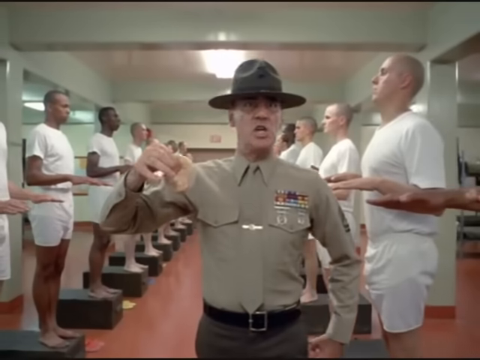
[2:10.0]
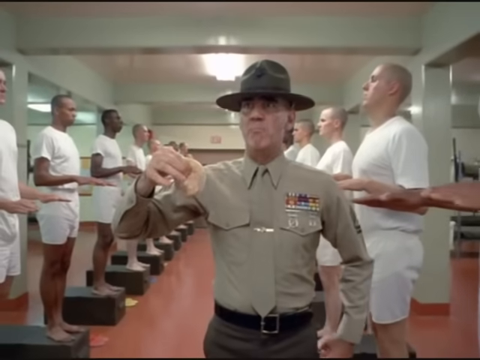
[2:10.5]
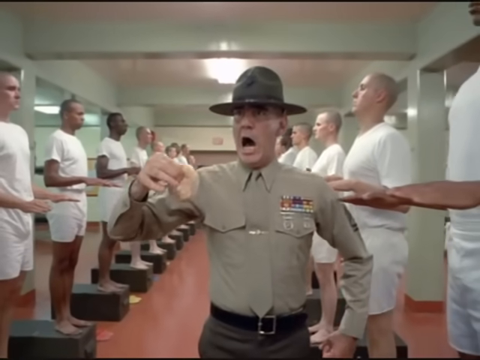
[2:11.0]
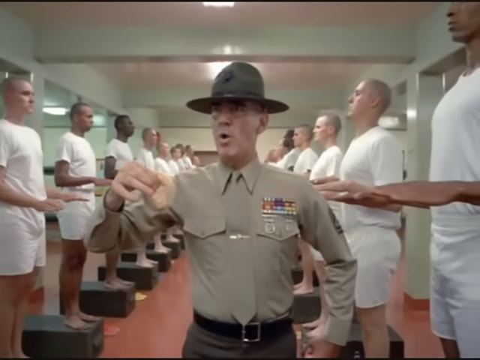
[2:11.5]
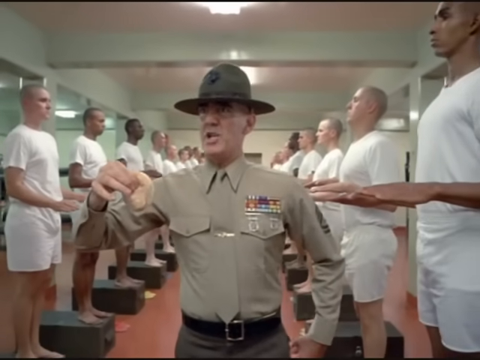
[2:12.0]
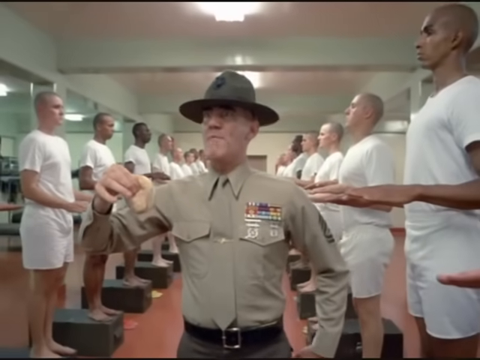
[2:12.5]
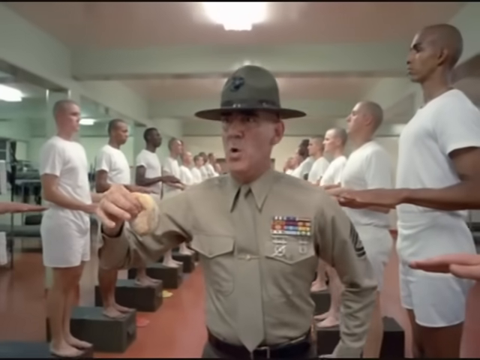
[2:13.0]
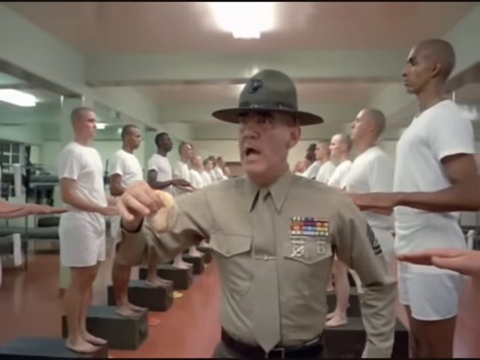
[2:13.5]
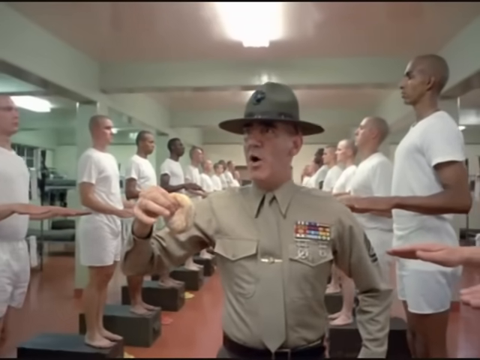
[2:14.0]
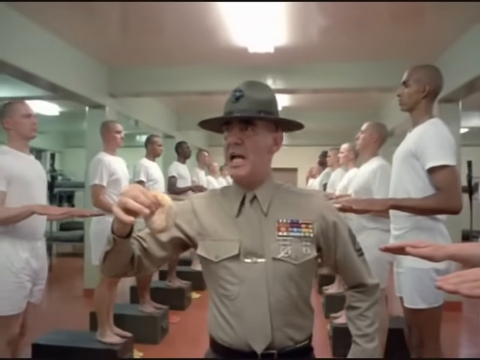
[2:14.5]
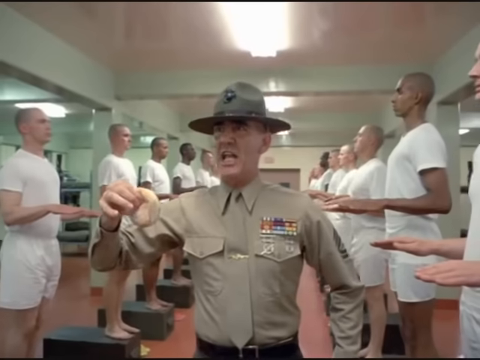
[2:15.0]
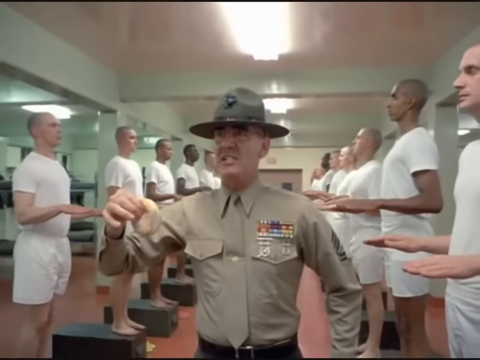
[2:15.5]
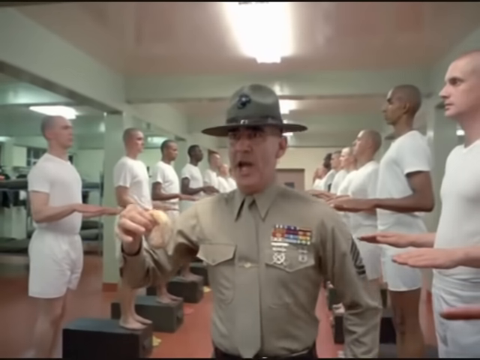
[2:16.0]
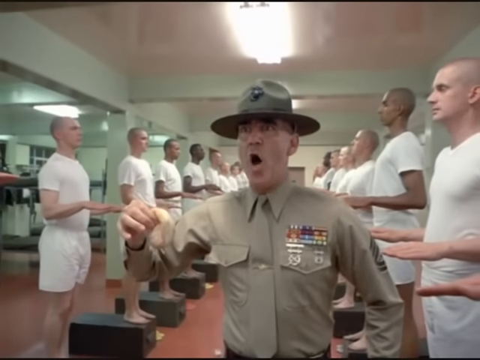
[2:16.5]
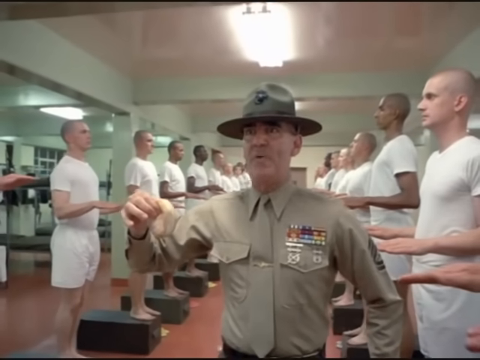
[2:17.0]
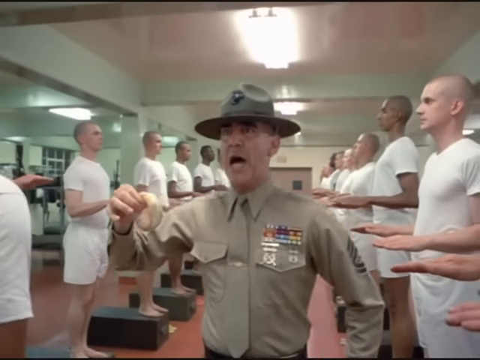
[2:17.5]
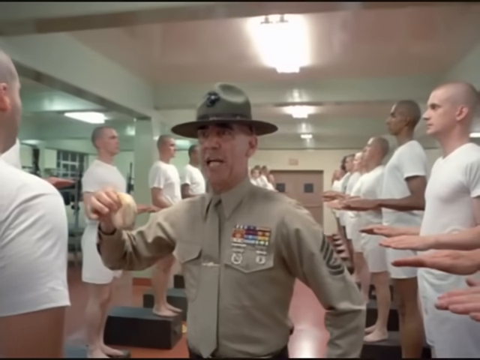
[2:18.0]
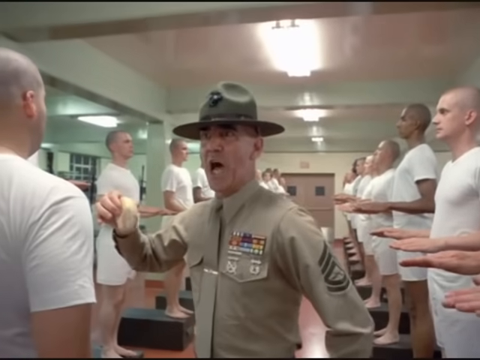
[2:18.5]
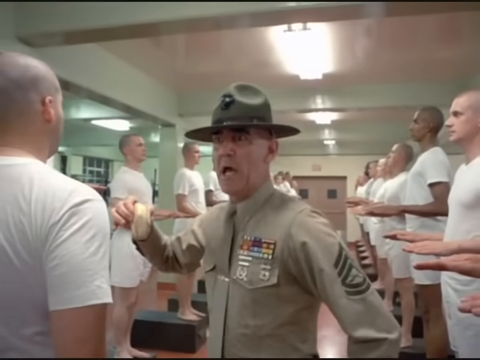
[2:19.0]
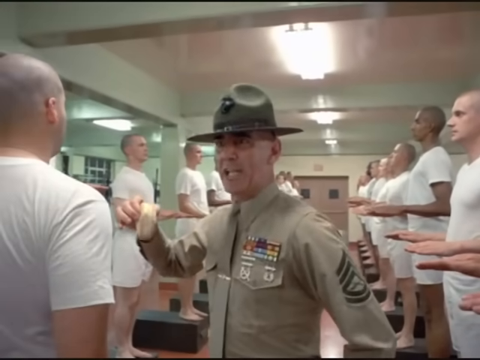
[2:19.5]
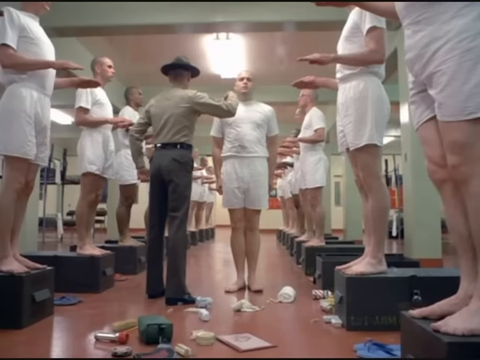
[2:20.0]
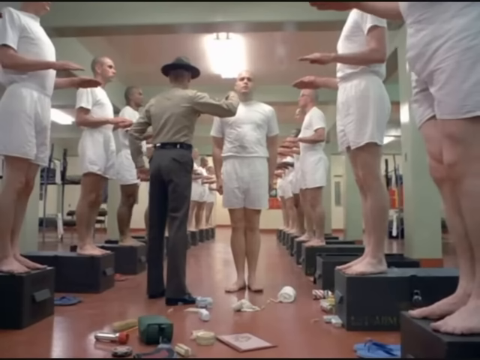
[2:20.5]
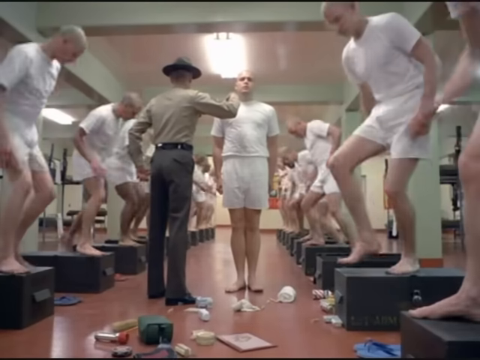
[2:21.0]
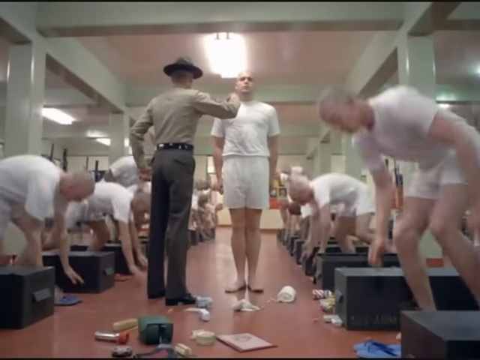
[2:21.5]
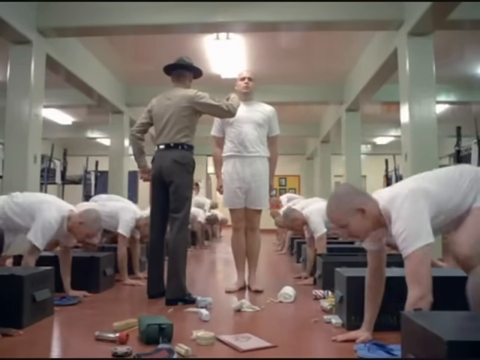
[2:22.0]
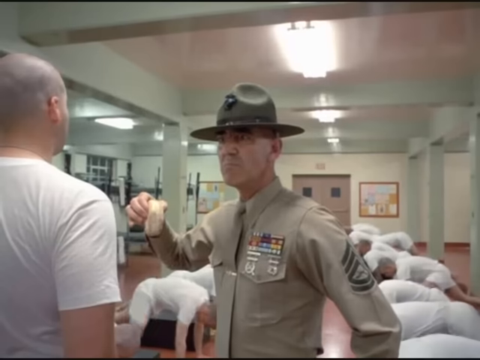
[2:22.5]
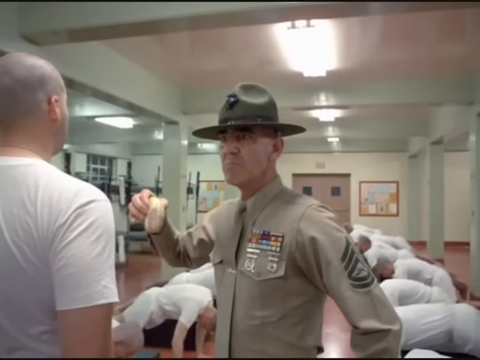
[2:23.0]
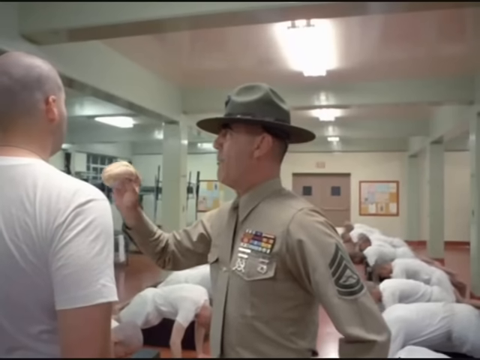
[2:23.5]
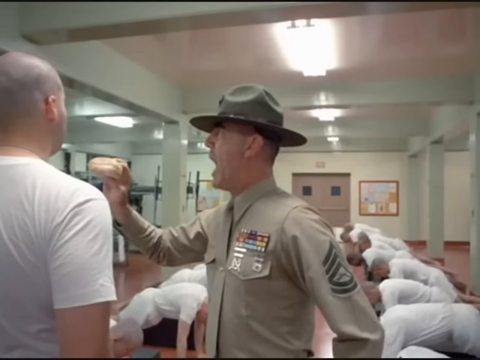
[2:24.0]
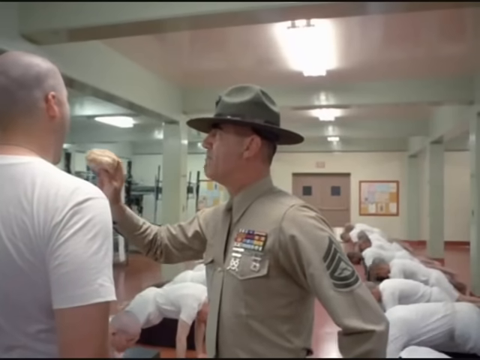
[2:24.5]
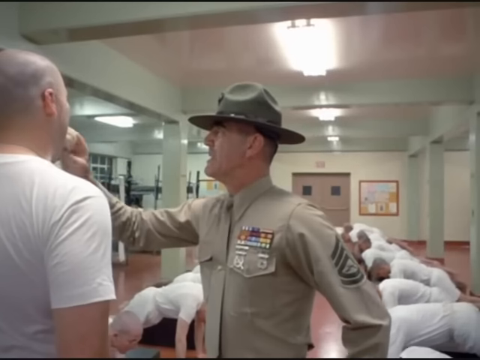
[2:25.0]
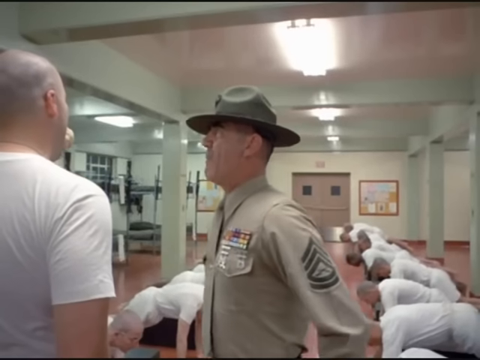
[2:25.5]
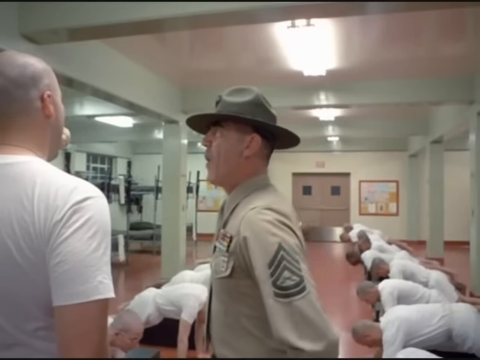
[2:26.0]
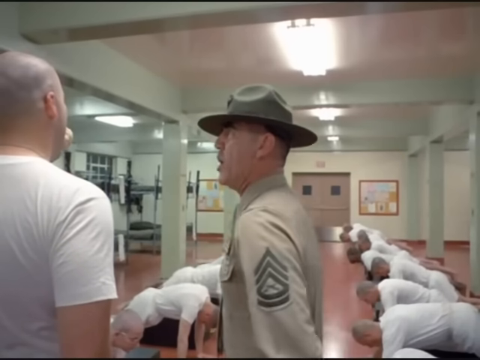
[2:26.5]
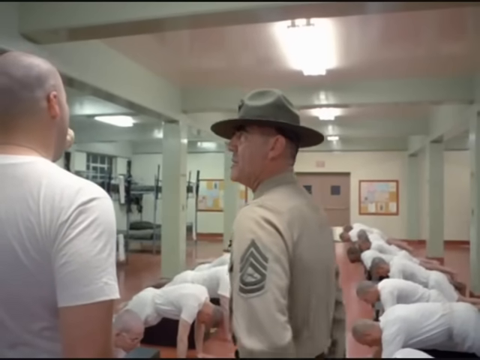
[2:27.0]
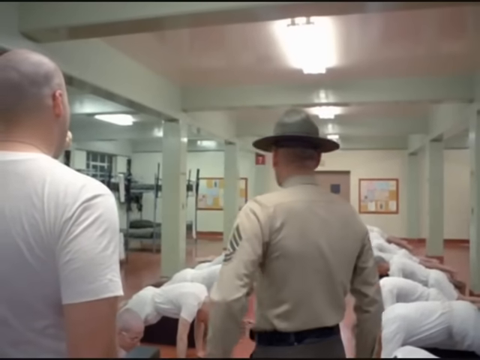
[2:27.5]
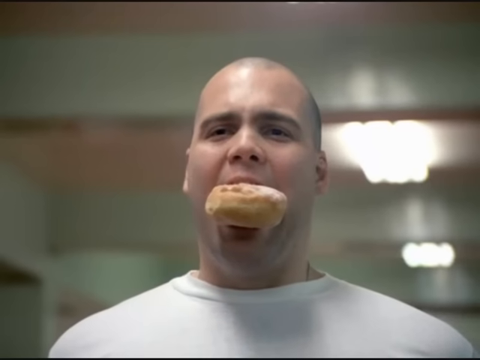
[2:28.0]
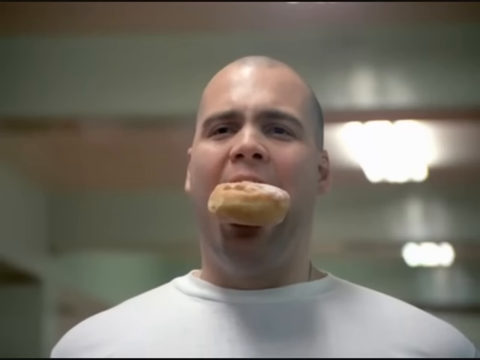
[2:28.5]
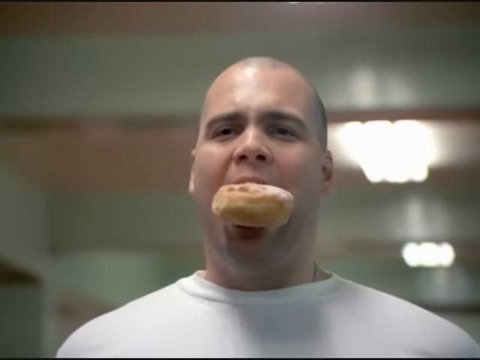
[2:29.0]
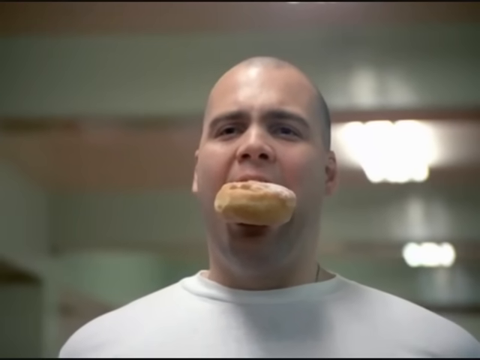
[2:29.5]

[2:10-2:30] A drill sergeant walks down an aisle; behind him, multiple recruits in white shorts and t-shirts stand barefoot on top of military foot lockers. The drill sergeant, in the center of the aisle, holds a pastry with his right thumb and index finger, his other arm at his side in a fist, and shouts at the various recruits as he walks. He continues until he reaches a recruit standing at attention in the middle of the aisle of the barracks, facing the camera. The shot cuts to a front view of the recruit, with multiple personal items thrown onto the floor. The drill sergeant keeps shouting, and all the other recruits get down from the tops of their foot lockers to the ground and start doing push-ups. The drill sergeant then takes the donut in his hand and shoves it into the face of the recruit still at attention in the center of the aisle.